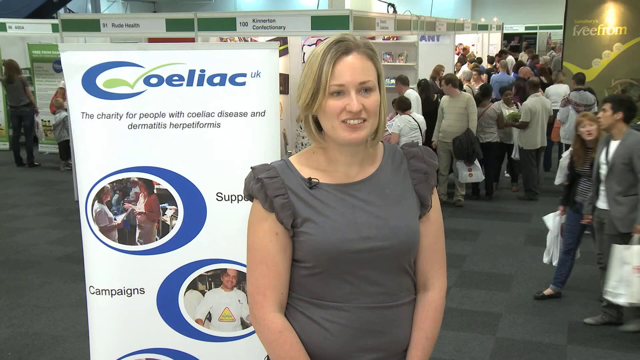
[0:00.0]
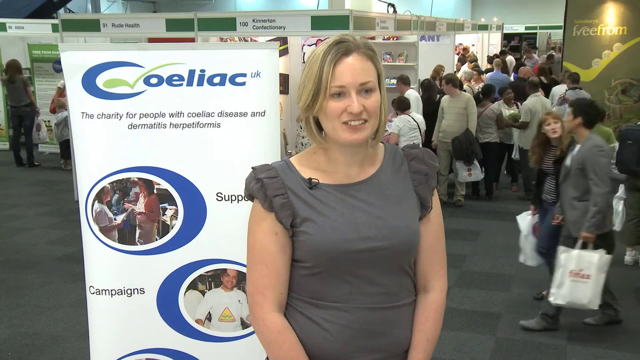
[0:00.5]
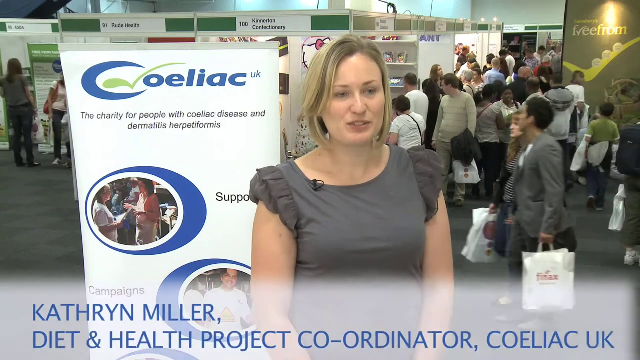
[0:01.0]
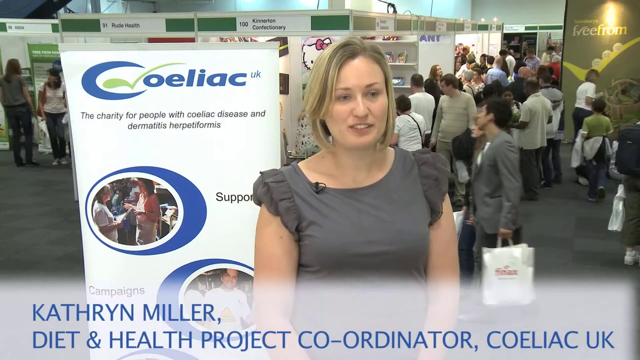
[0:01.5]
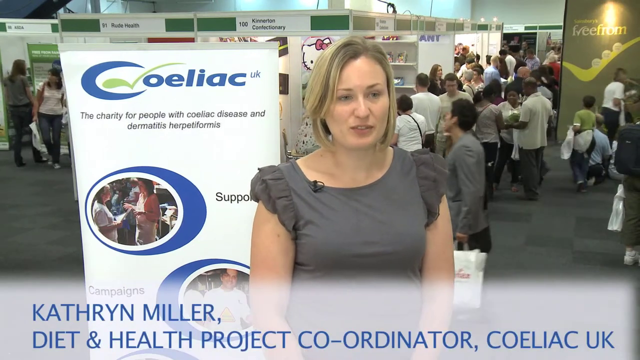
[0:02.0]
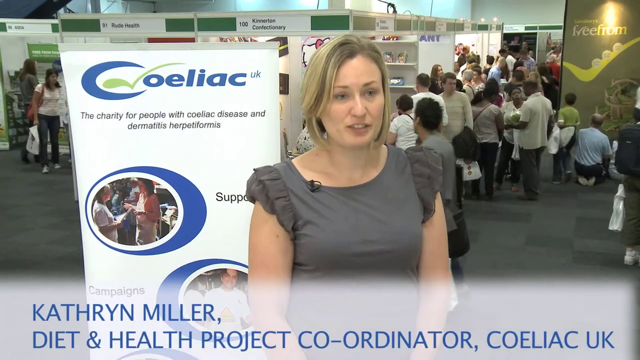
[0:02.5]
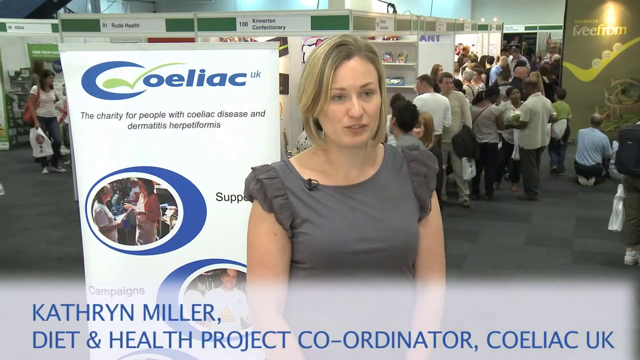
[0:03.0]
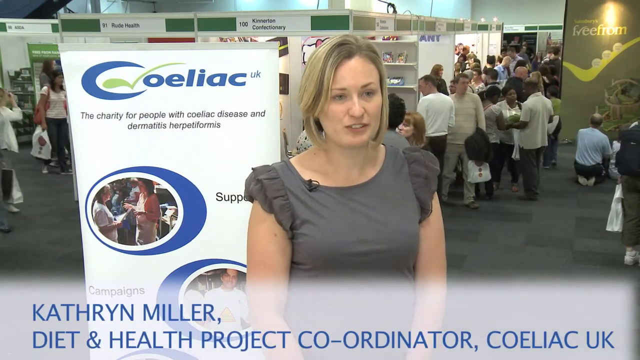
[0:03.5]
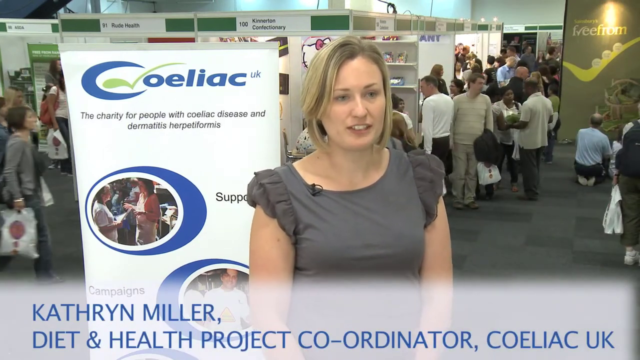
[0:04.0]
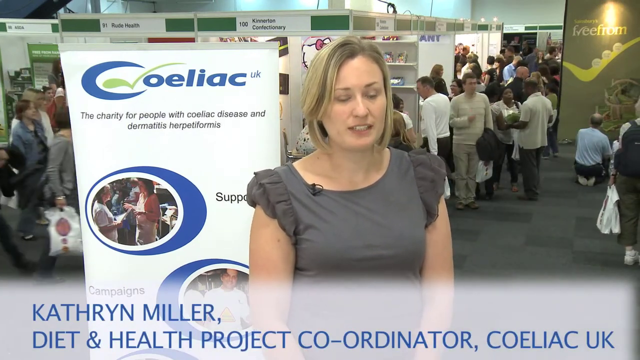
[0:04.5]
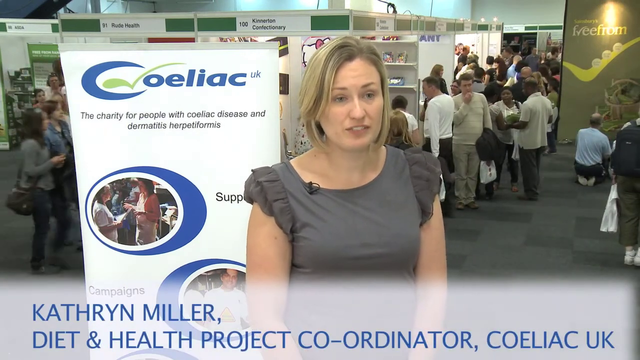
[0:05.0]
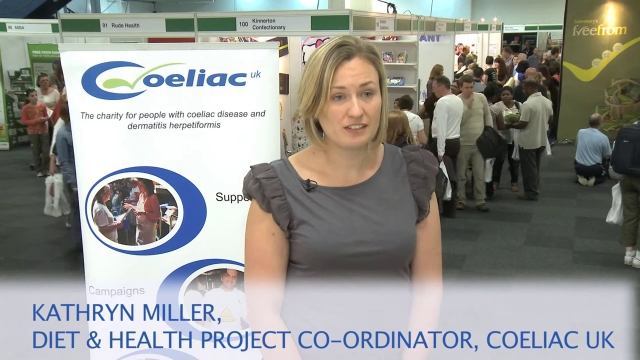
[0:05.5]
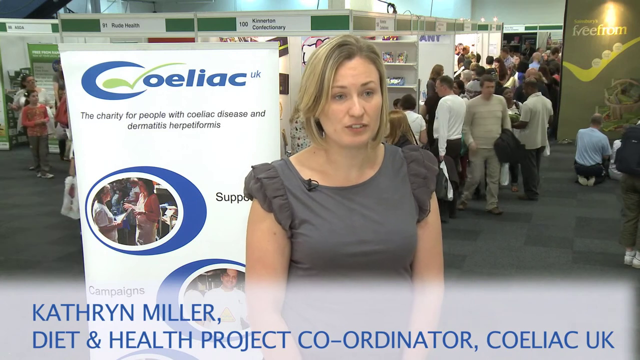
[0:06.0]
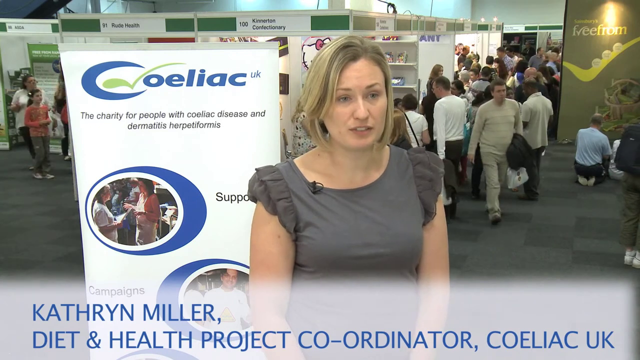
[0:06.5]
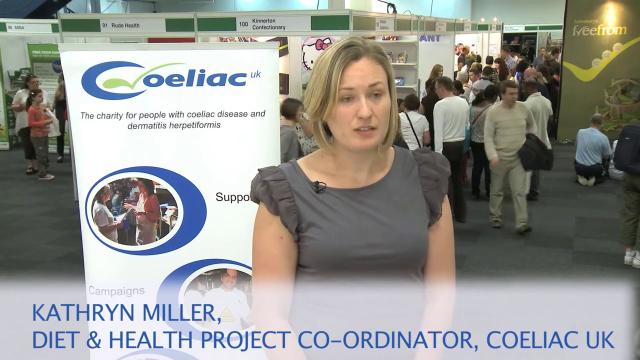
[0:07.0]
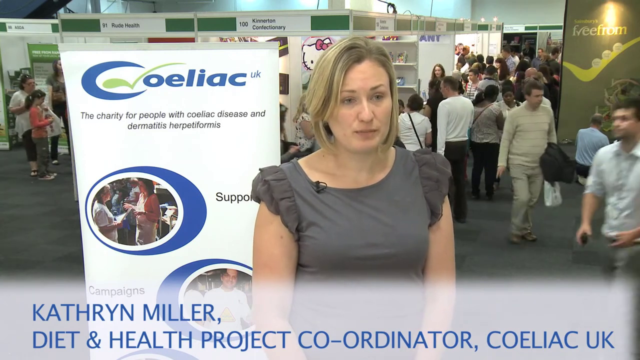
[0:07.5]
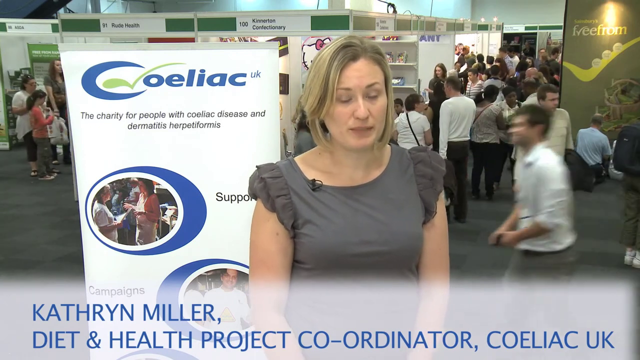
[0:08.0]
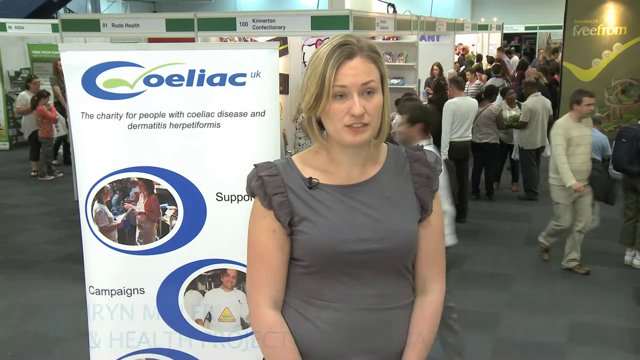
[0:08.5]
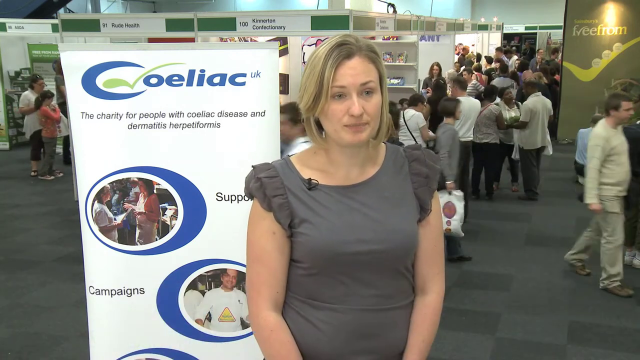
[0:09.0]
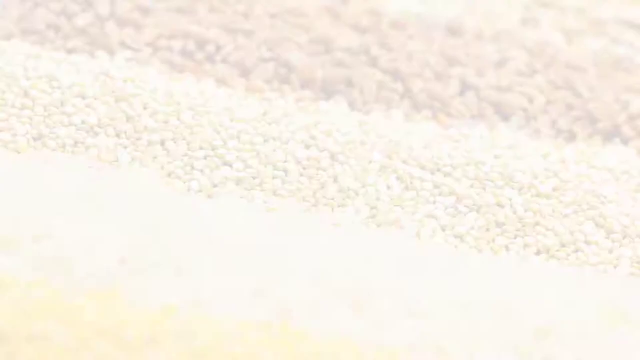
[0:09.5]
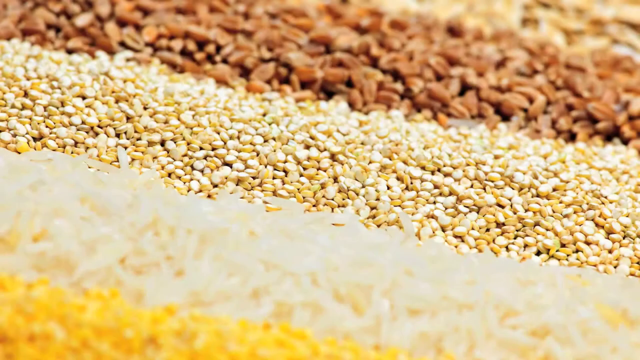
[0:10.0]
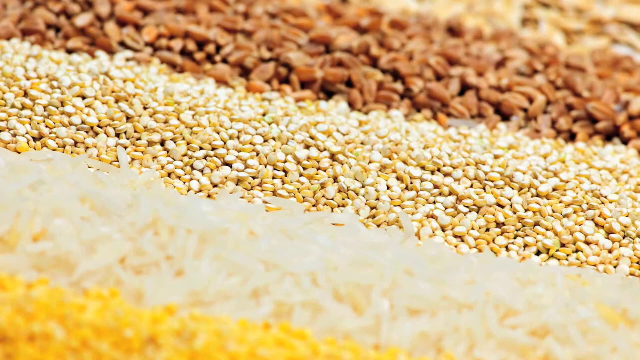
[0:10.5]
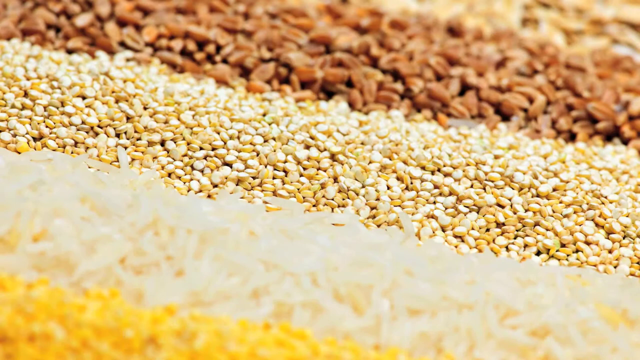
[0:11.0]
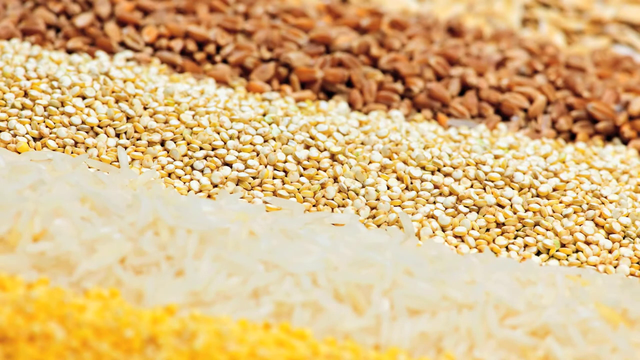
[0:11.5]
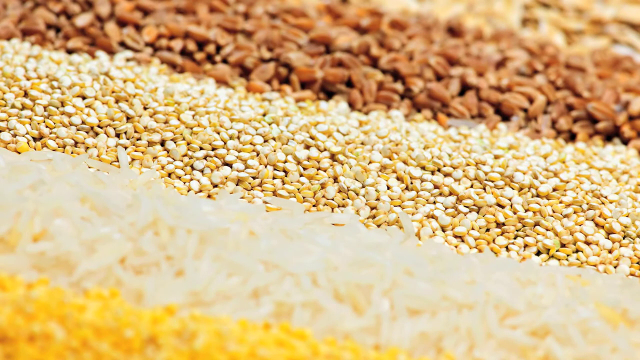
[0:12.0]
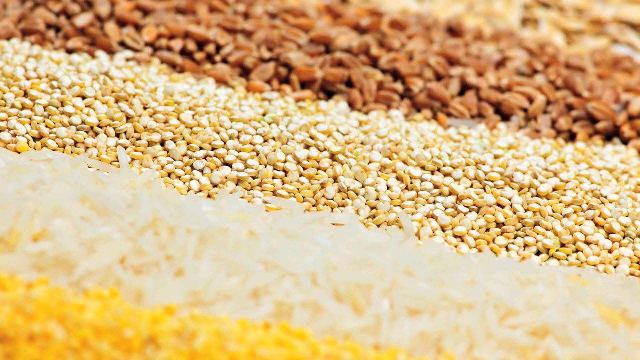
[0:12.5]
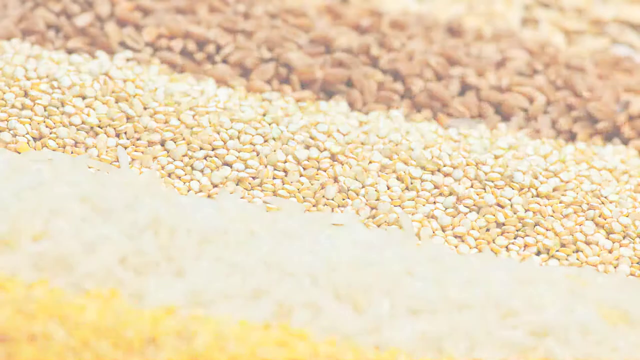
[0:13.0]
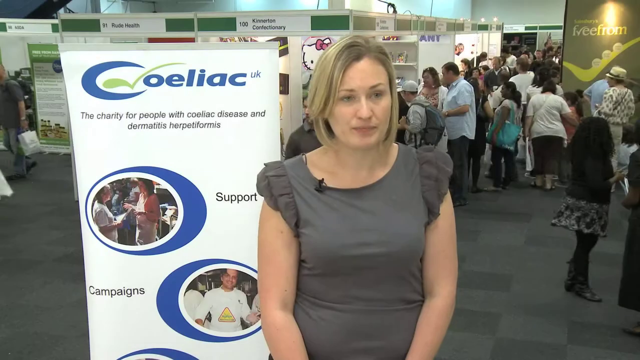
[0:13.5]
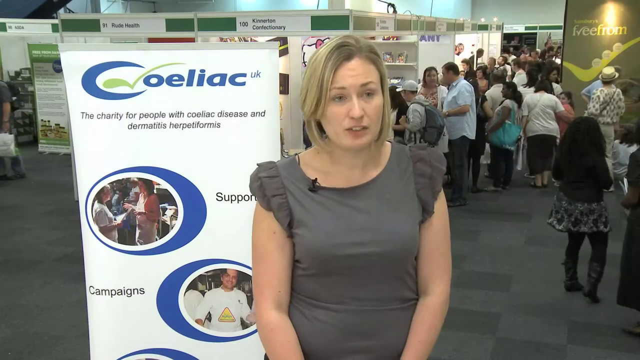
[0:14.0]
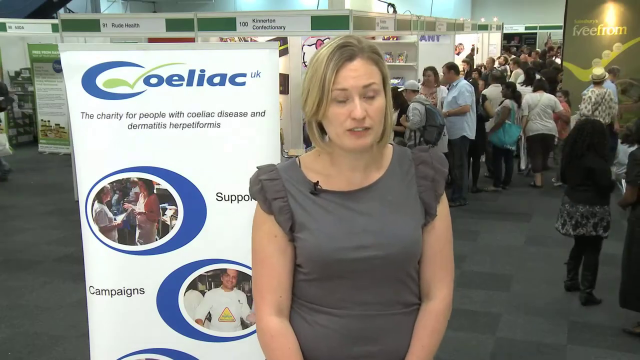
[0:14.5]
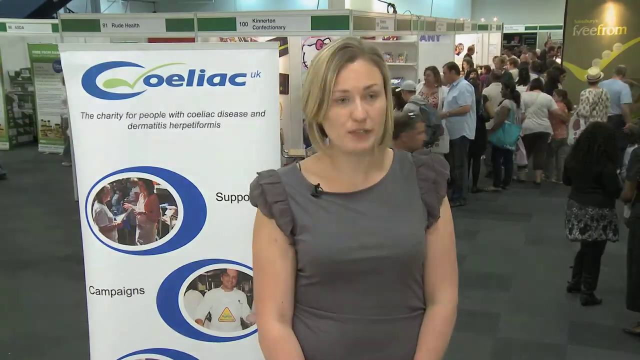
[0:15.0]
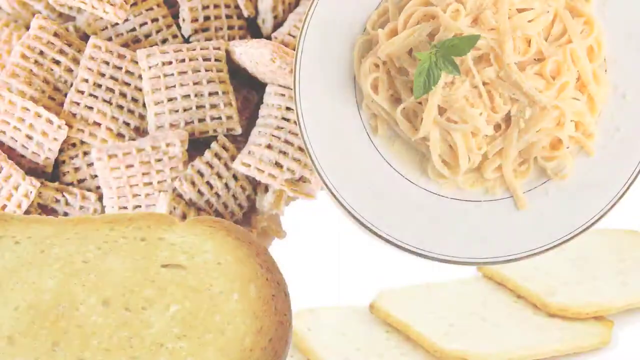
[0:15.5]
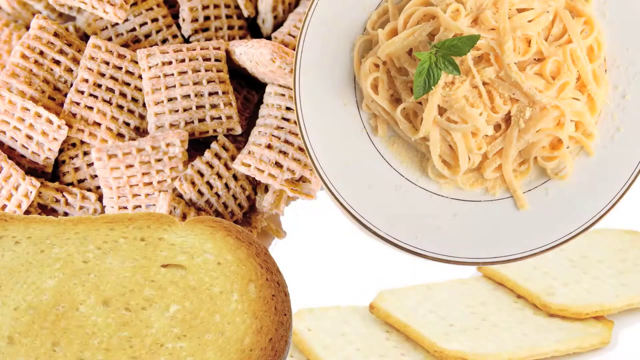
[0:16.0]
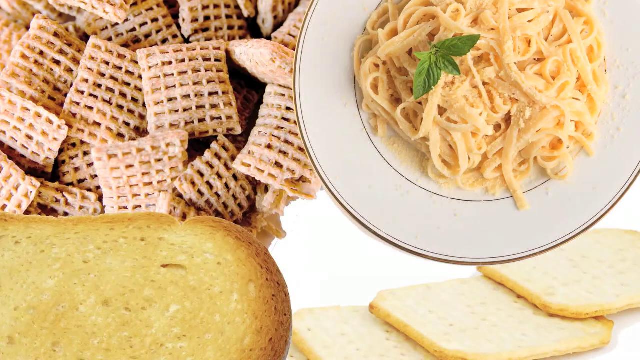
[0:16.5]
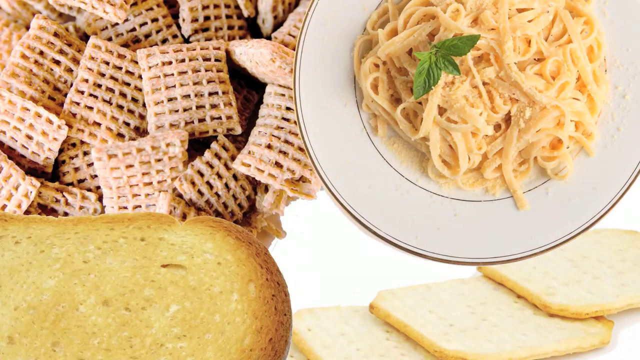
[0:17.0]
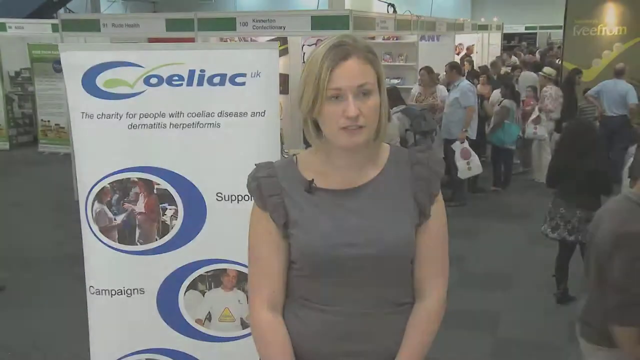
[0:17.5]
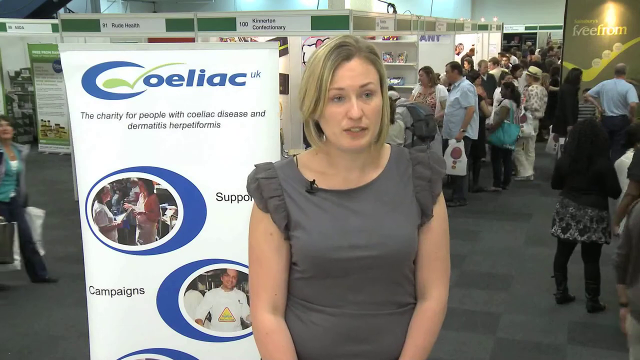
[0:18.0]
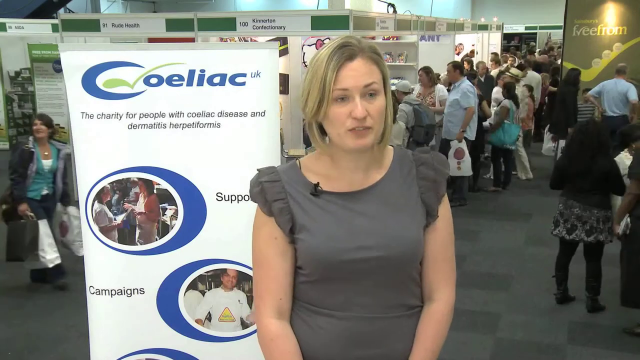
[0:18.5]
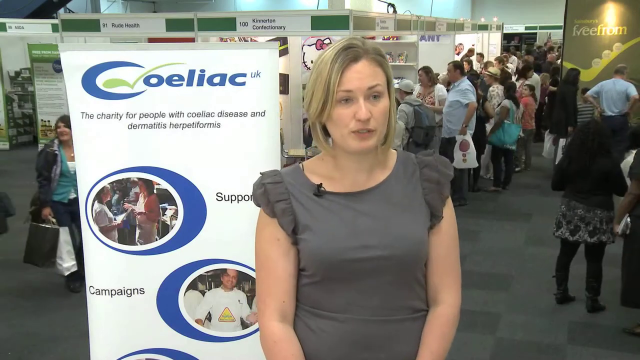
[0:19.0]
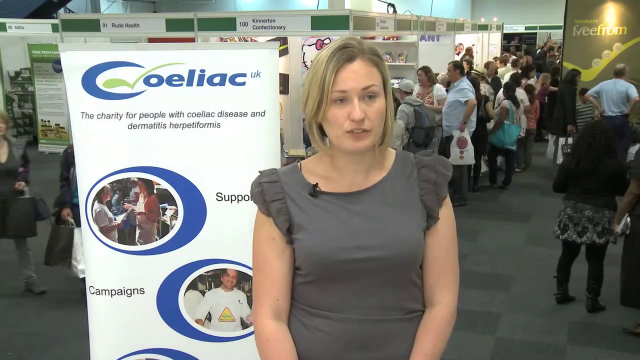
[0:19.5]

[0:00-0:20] A young woman is interviewed in what looks to be a convention setting. She has medium-length blonde hair and wears a short-sleeved gray shirt. She stands in front of a poster-style sign, blue on a white background, that reads "Coeliac" and "the charity for people with Coeliac Disease and Dermatitis Herpetiformis"; there are also some images of people on the sign. She appears to be talking to the camera, and on-screen text gives her name as "Catherine Miller, Diet and Health Project Coordinator, Coeliac UK." The video cuts to an image of various grains, followed by photographs of cereal, pasta and bread, before cutting back to the interview with the woman.